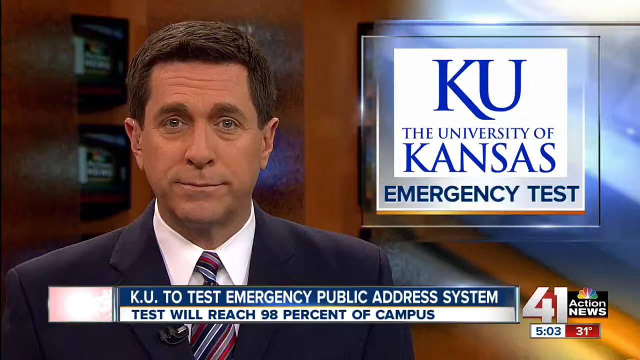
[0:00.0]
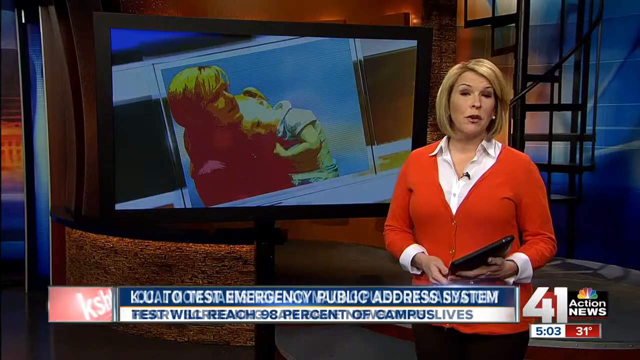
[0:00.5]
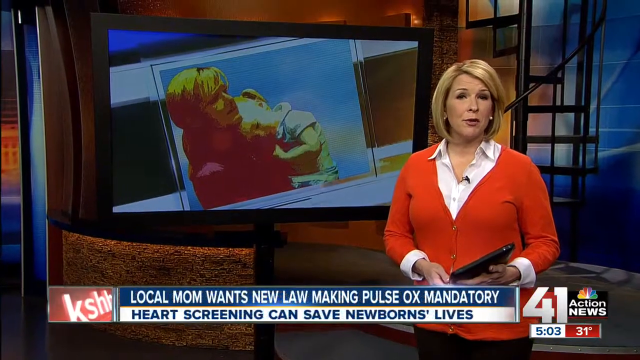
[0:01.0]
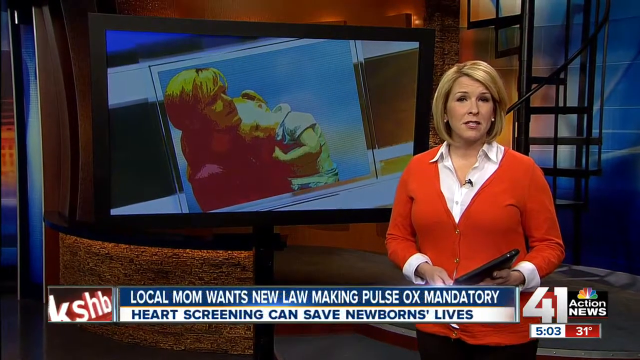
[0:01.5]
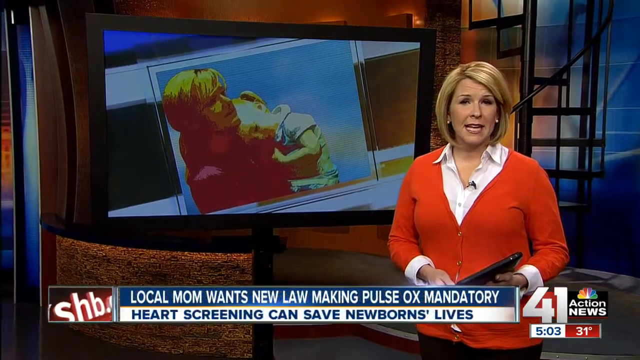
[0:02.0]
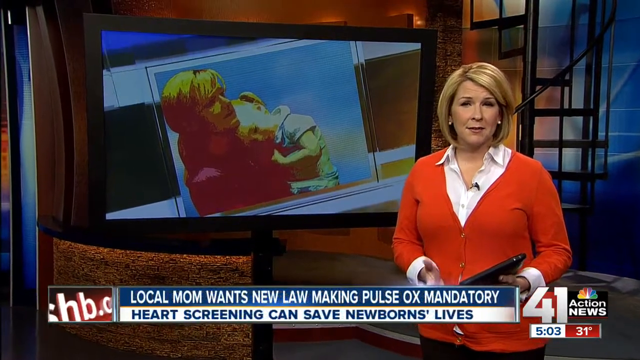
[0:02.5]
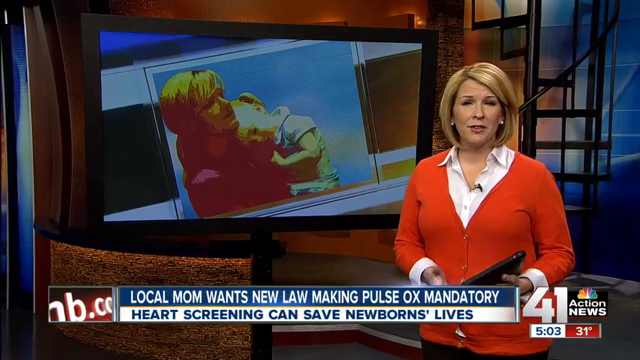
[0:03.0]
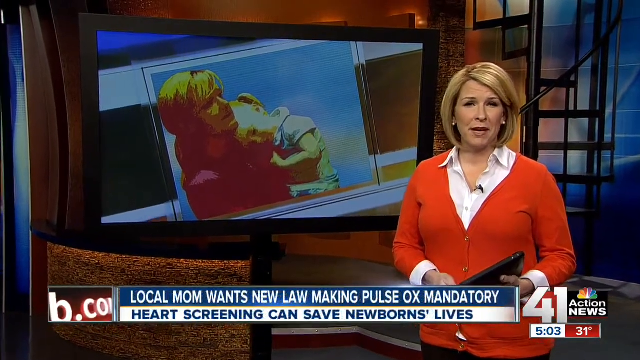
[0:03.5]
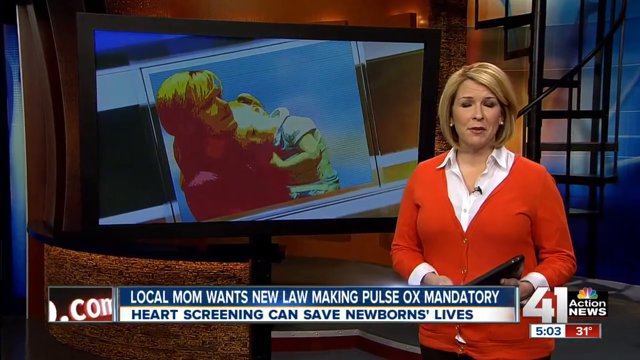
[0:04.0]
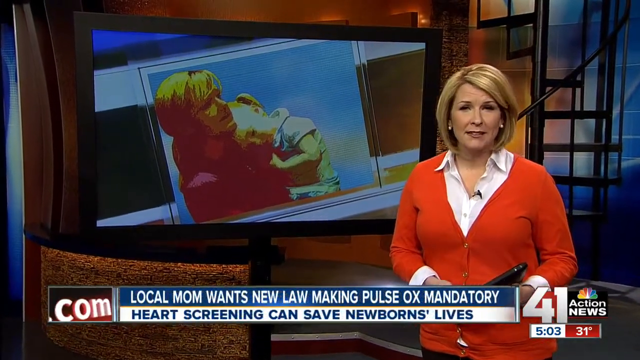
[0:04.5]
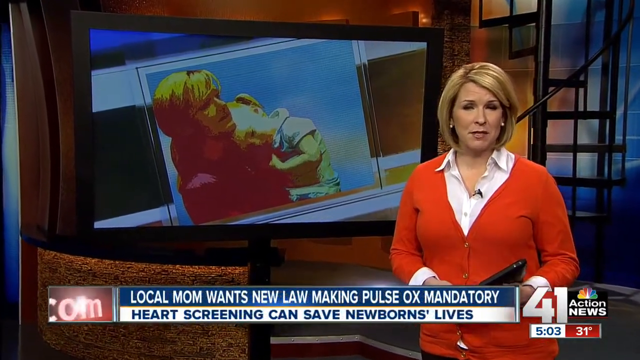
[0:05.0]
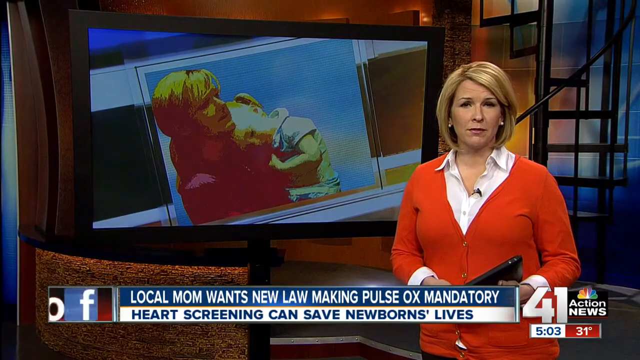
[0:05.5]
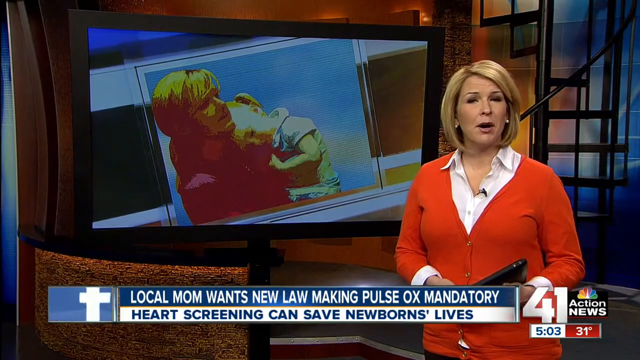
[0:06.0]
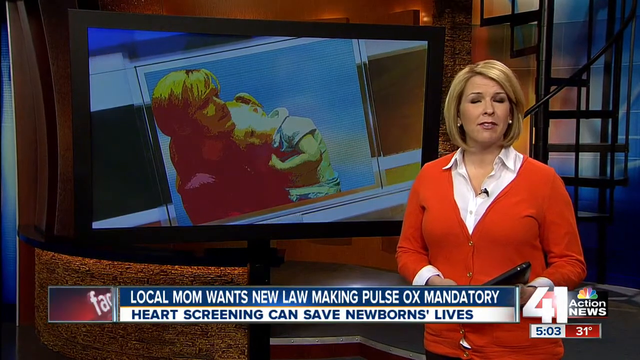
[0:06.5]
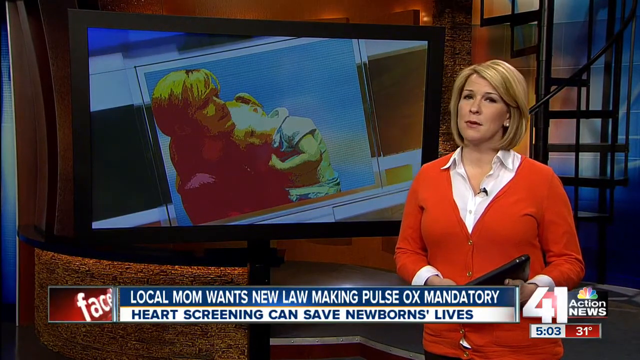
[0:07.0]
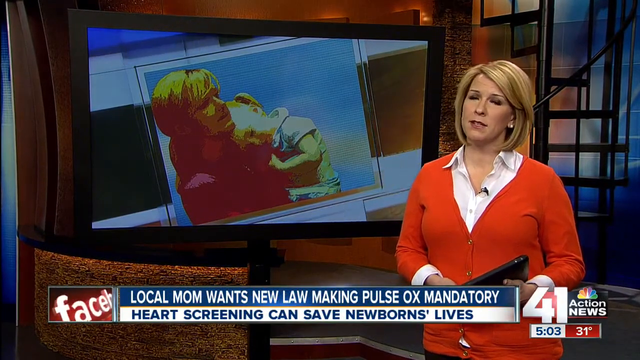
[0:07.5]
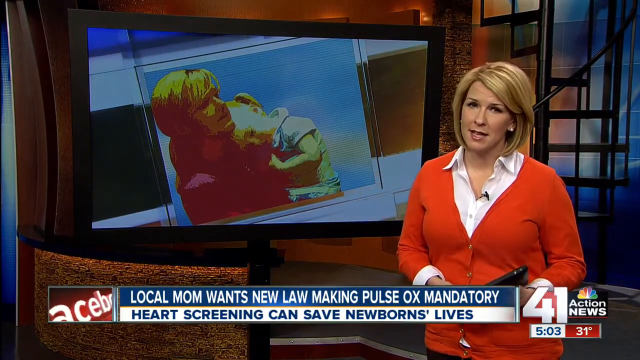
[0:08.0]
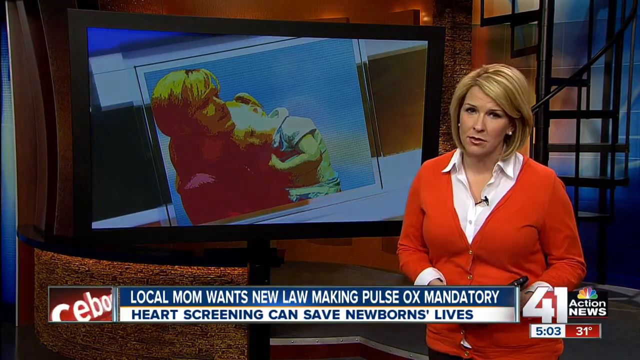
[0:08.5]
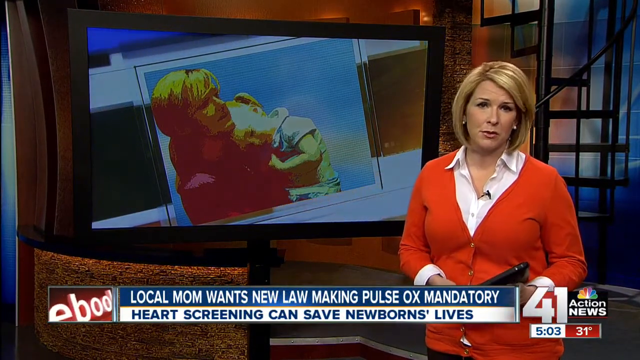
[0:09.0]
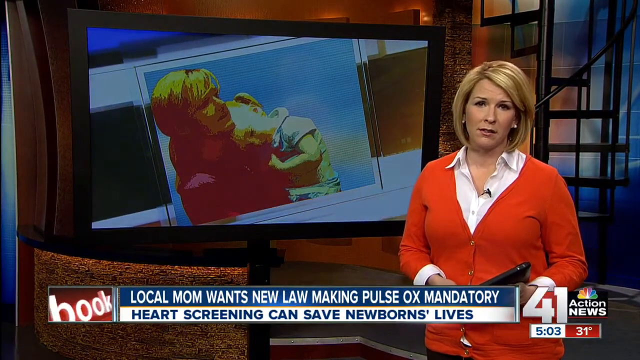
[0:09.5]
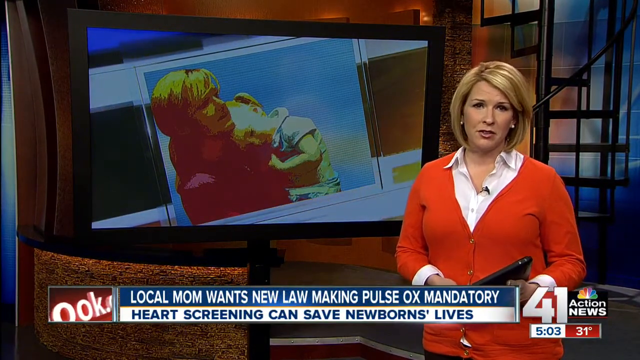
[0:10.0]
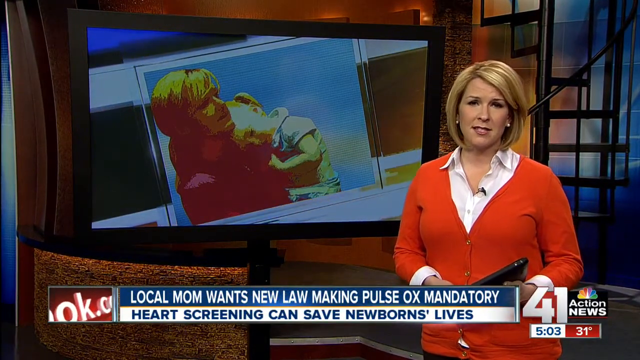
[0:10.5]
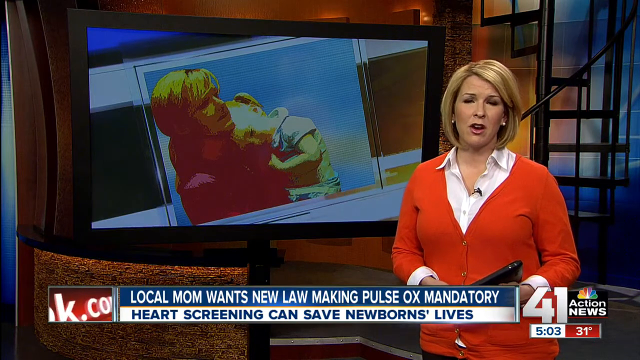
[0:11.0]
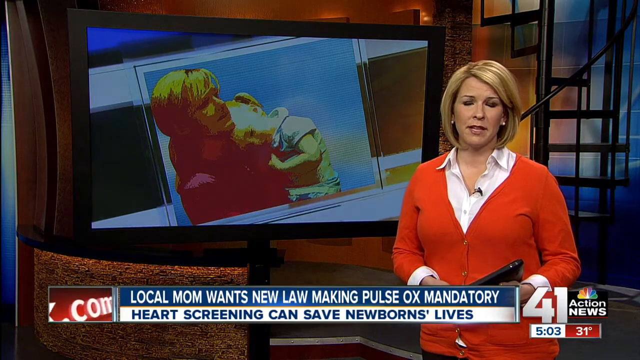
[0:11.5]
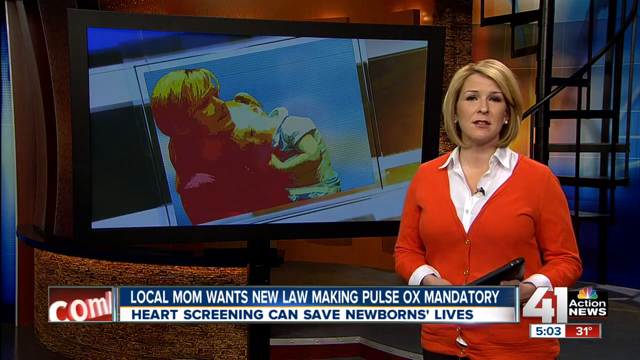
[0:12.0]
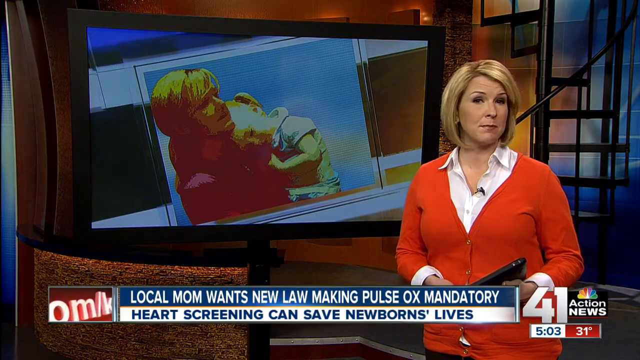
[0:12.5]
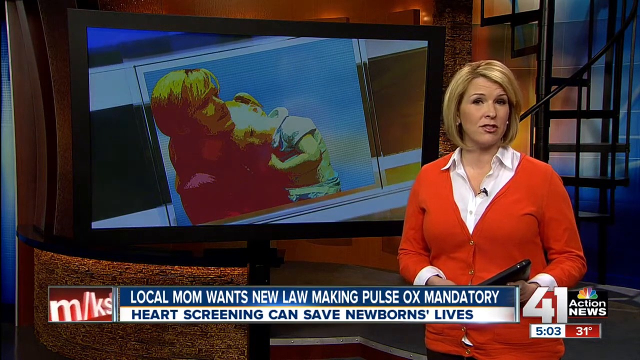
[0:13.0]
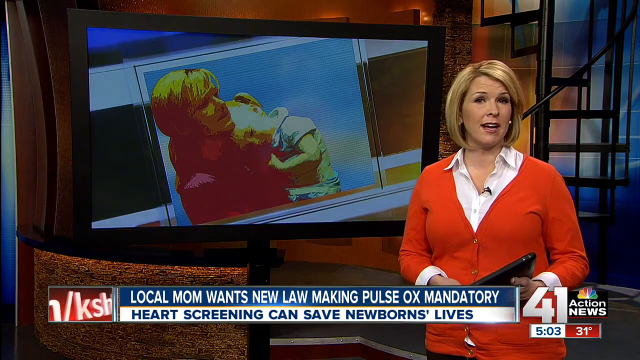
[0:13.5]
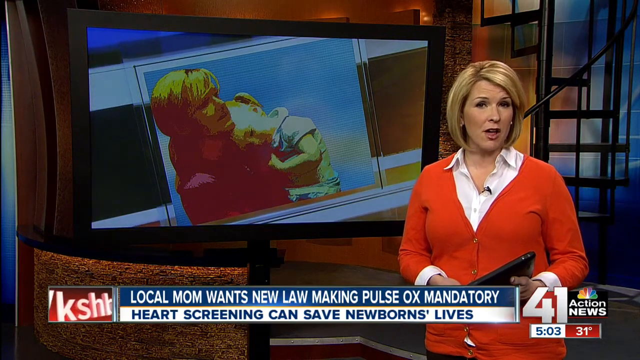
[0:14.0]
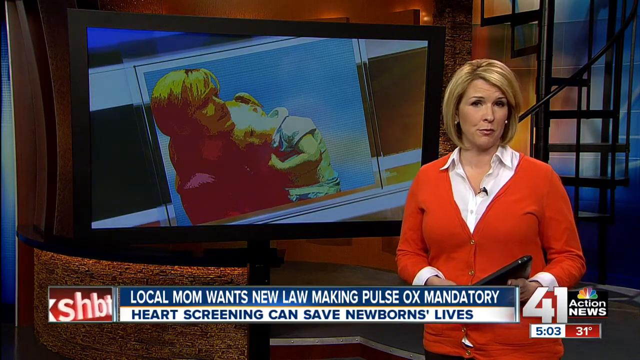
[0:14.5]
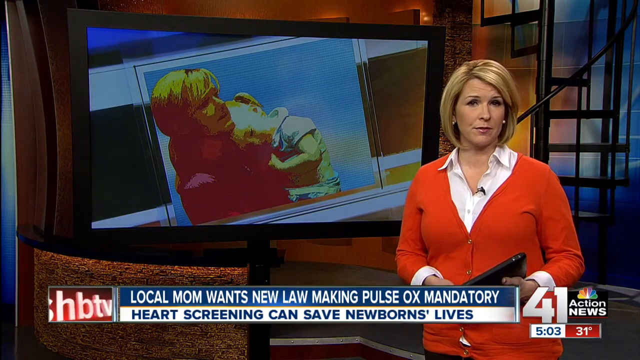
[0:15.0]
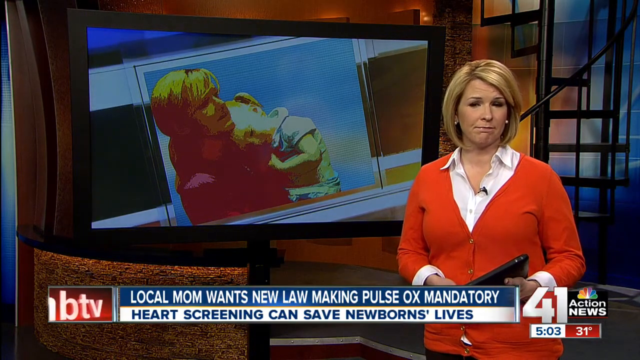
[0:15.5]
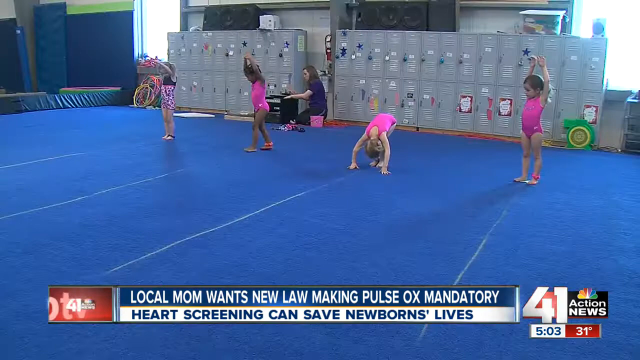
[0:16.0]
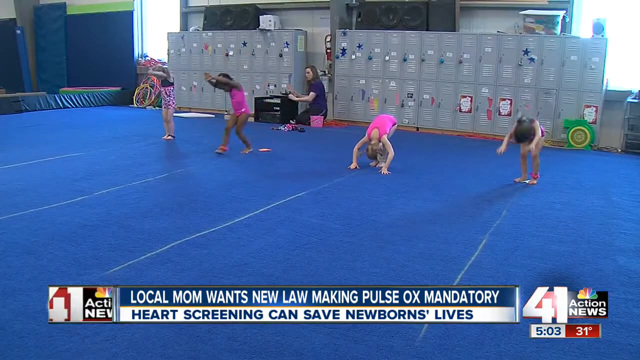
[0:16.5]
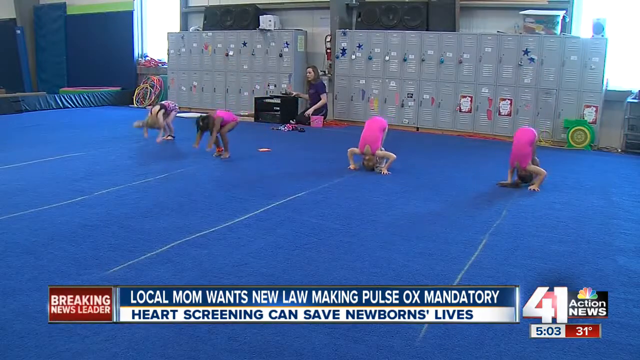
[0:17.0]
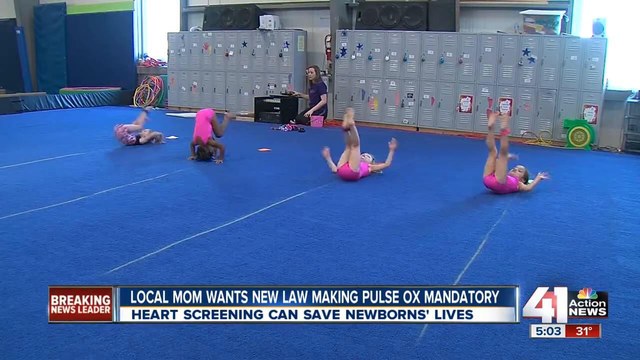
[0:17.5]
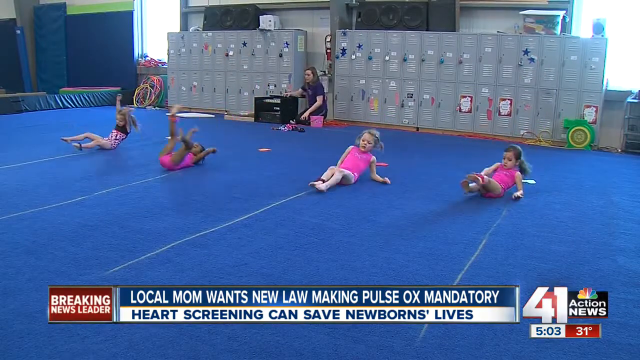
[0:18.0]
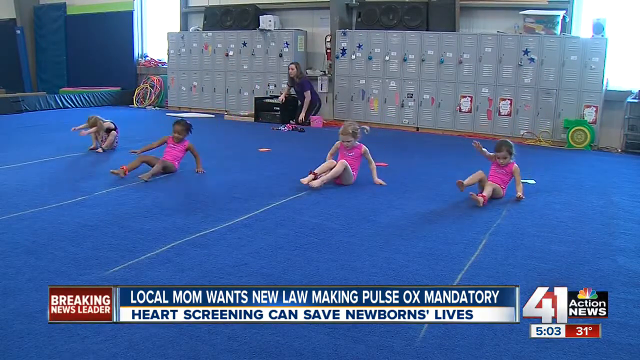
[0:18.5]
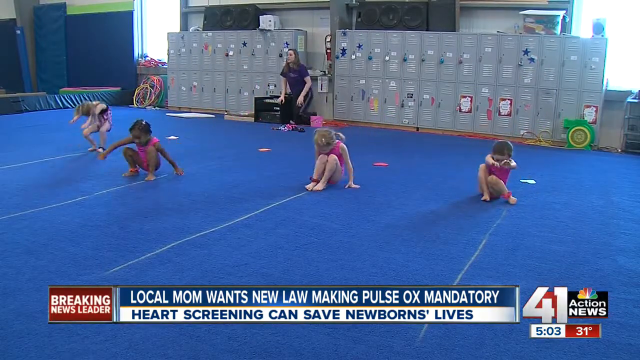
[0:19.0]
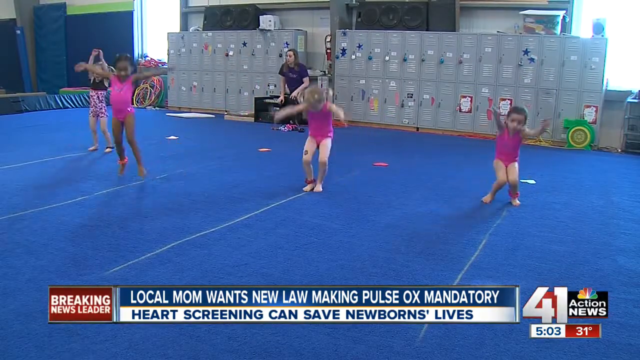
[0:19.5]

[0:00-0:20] A male reporter pops up briefly, reporting on different news, and then the broadcast switches to another news reporter. She has blondish hair and wears an orange jersey, a white shirt and pearl earrings, and she holds a tablet in her hand. She looks to be in her late 40s. Behind her is a screen showing an illustration of a woman holding a child. The broadcast is from Action News 41; it is 3 past 5 and 31 degrees. The title of the segment reads "Local mom wants new law-making pulse ox mandatory heart screening can save newborns lives". The reporter talks while the camera zooms in on her. She keeps talking while facing the camera and holding her tablet, her sleeves rolled up a bit past the wrists. A scene then shows four junior-school girls and one adult woman.